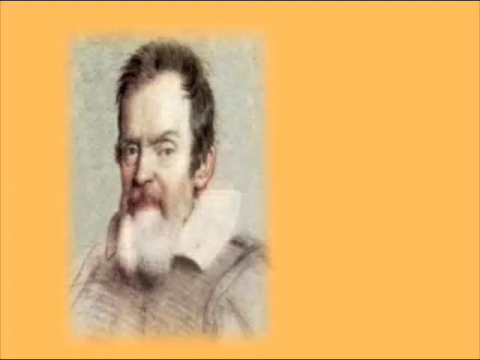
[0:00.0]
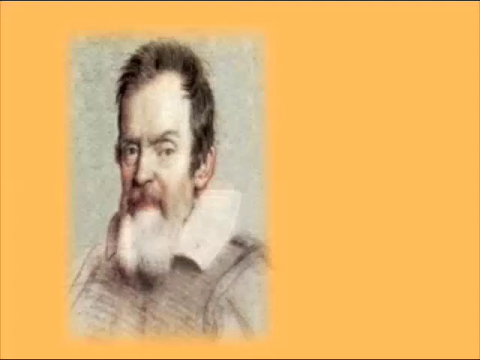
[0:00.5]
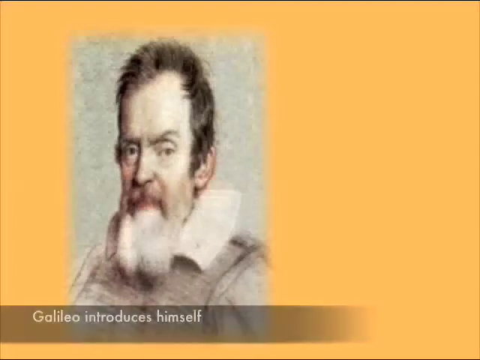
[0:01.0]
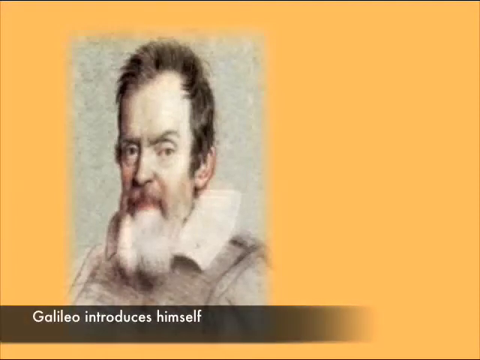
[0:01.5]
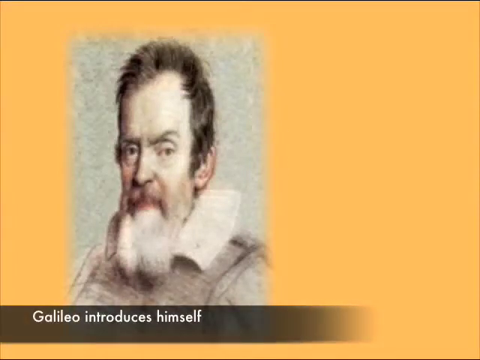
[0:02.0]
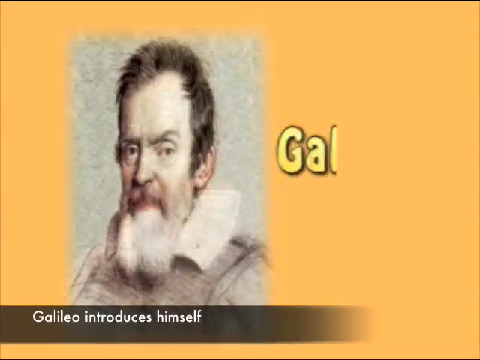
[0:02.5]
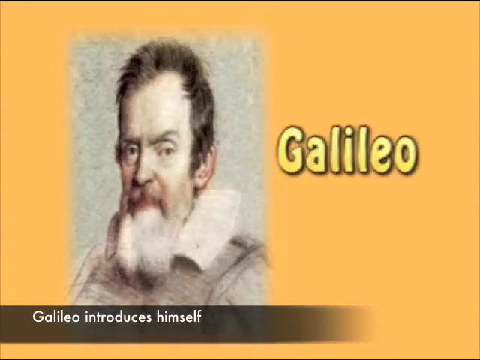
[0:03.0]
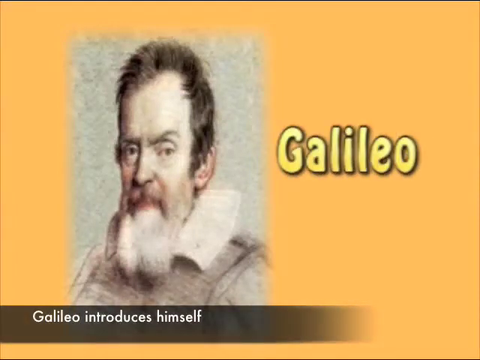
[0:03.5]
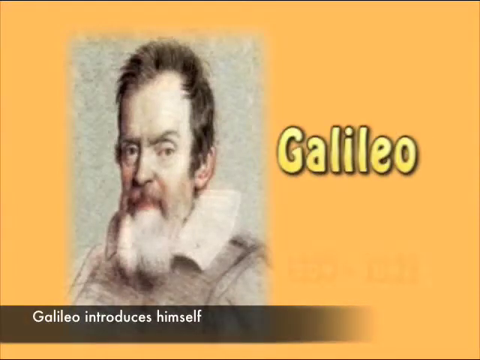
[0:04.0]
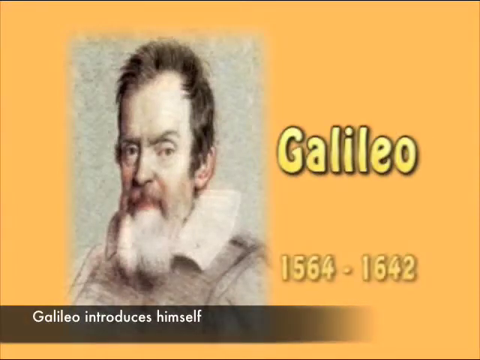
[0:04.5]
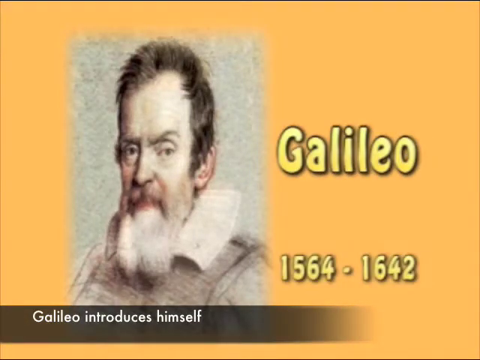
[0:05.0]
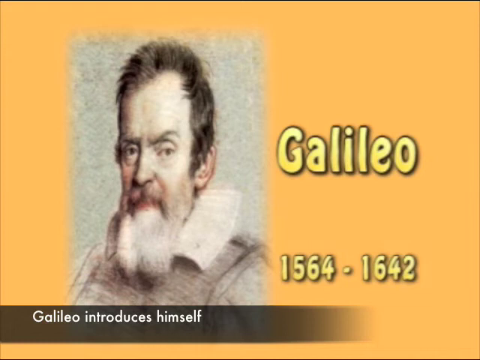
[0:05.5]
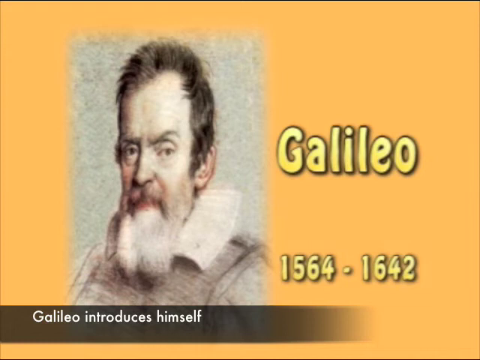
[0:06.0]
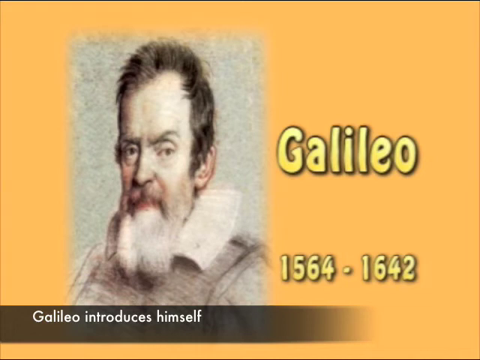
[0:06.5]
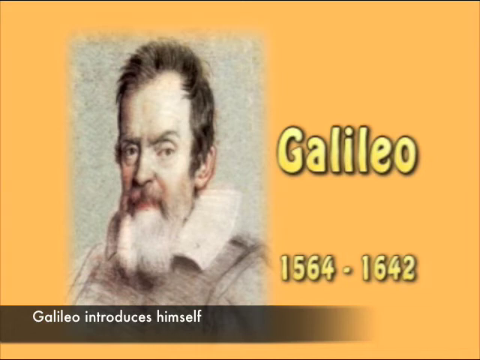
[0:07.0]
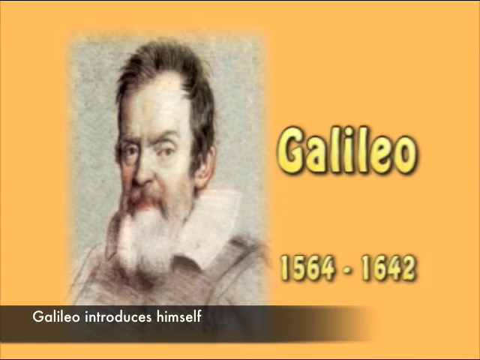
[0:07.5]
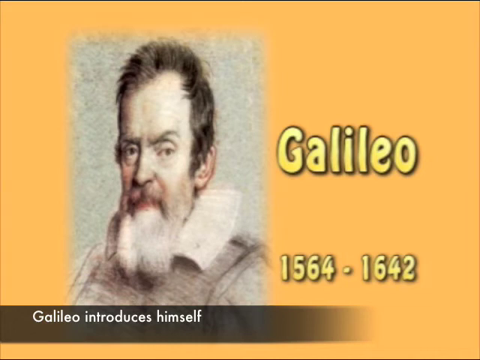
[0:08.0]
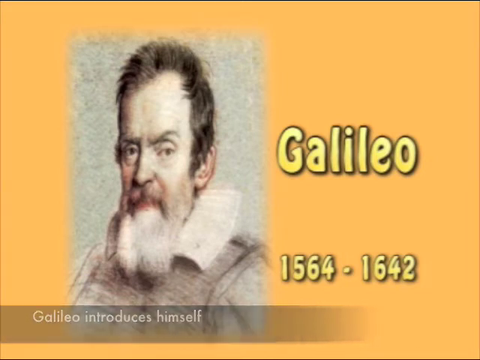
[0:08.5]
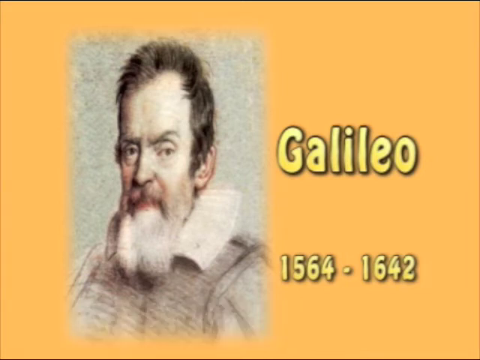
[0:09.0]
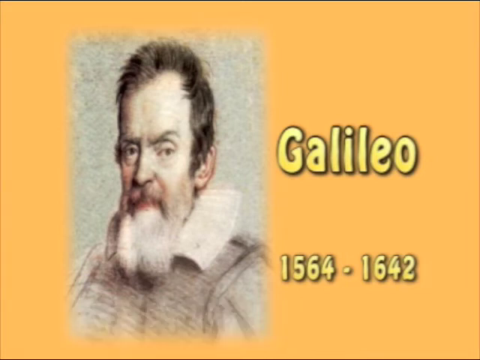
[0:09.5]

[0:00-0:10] The video opens on an orange-yellow screen. Toward the left is a portrait of a man who seems to be Galileo. He is turned slightly to the left and has a beard, a large collar, a beige top, sort of furrowed eyebrows, and dark short hair. At the bottom, white text reads "Galileo introduces himself." To the right, letters pop up spelling "Galileo" in a shiny gold color, and beneath that appear his birth year, 1564, and the year of his death, 1642. The bottom text fades, the dates fade, and the black bar across the bottom fades away as well.